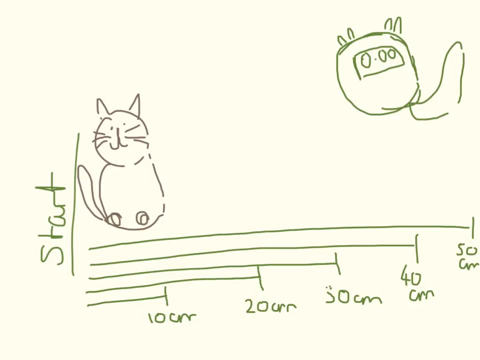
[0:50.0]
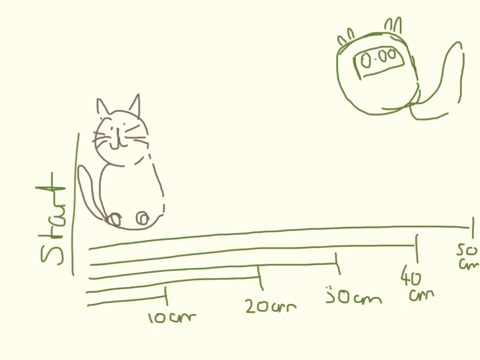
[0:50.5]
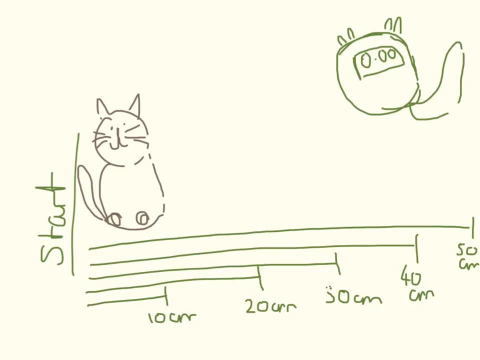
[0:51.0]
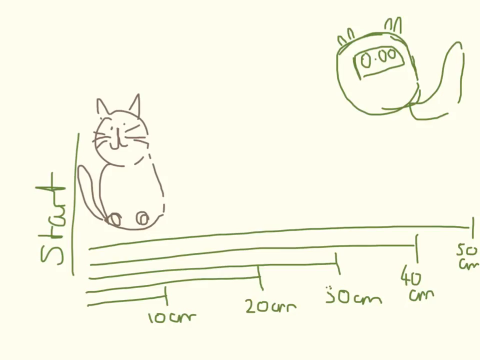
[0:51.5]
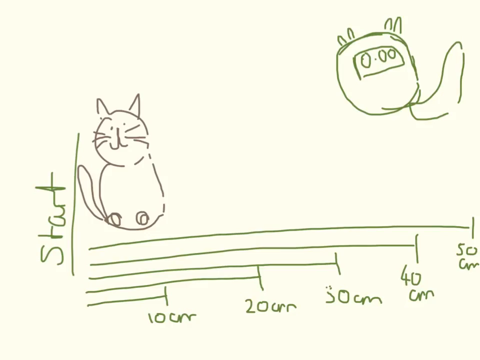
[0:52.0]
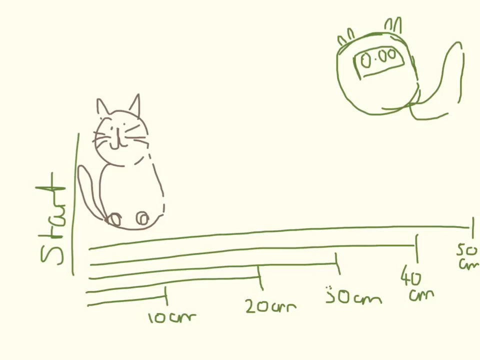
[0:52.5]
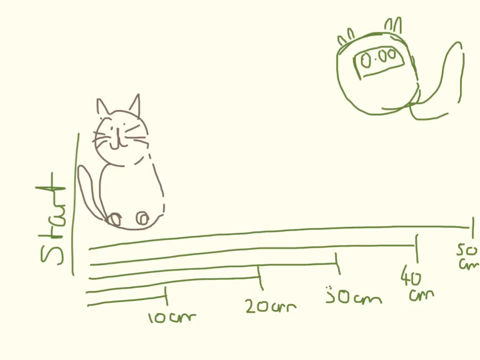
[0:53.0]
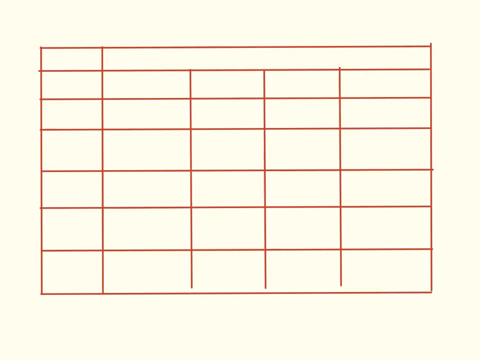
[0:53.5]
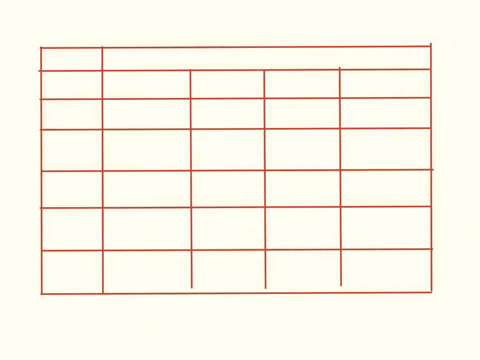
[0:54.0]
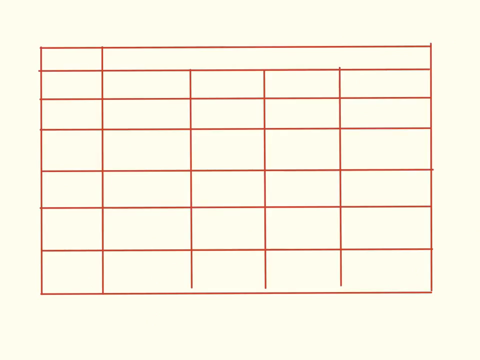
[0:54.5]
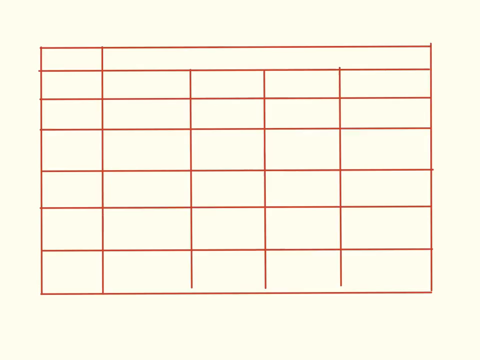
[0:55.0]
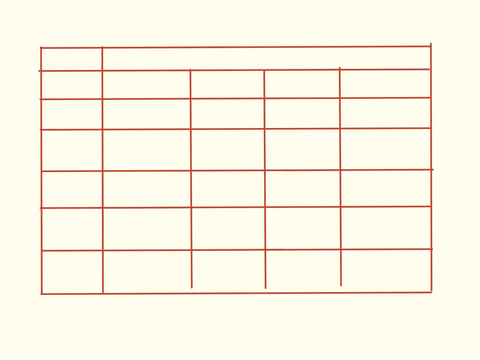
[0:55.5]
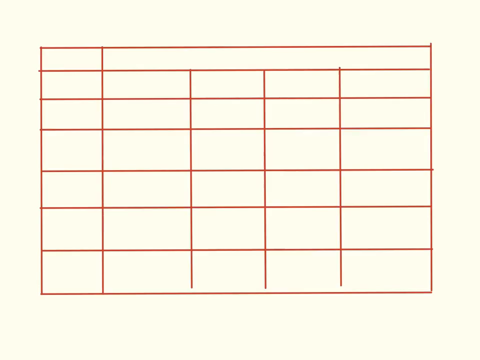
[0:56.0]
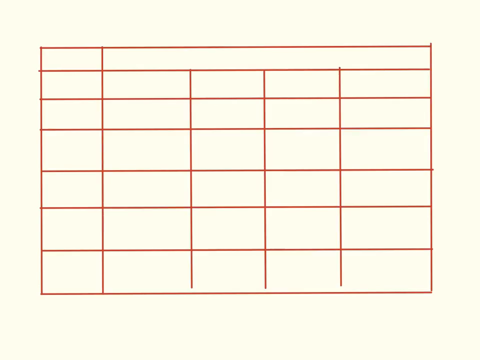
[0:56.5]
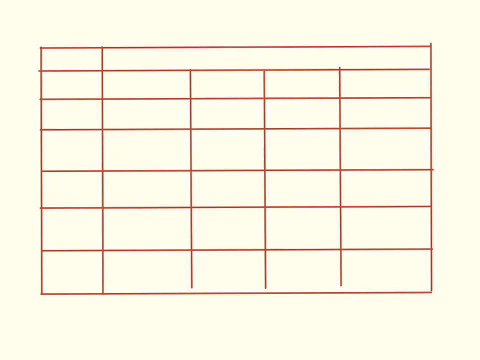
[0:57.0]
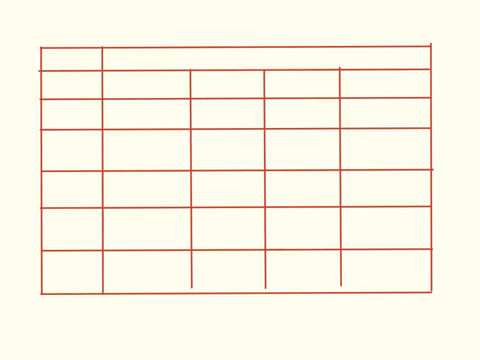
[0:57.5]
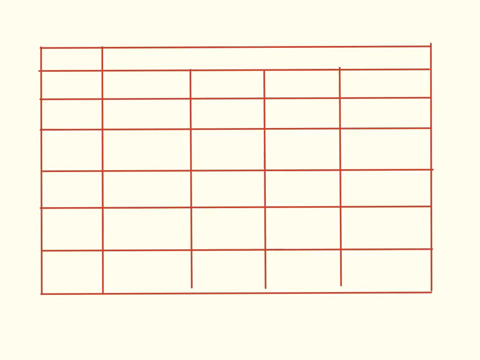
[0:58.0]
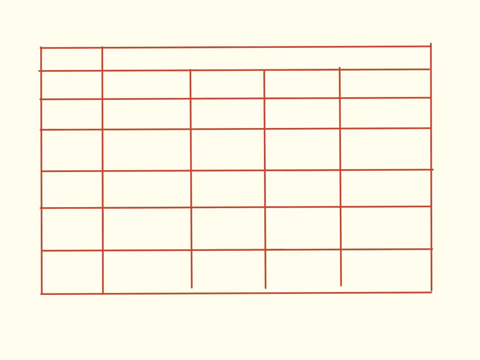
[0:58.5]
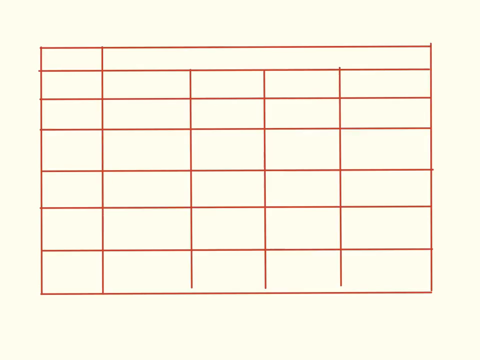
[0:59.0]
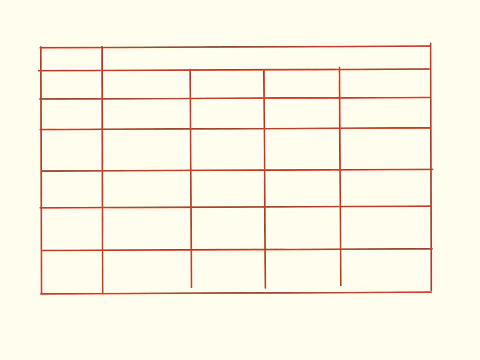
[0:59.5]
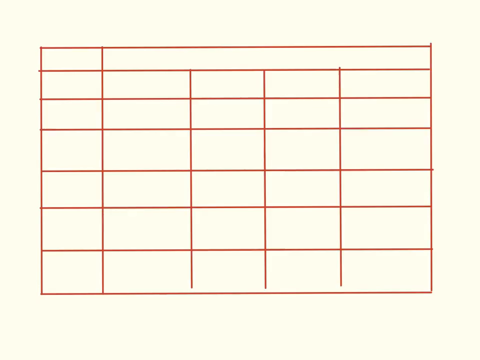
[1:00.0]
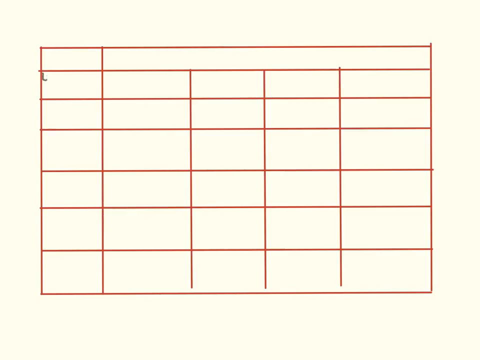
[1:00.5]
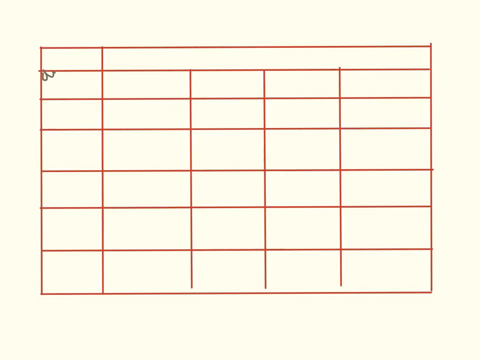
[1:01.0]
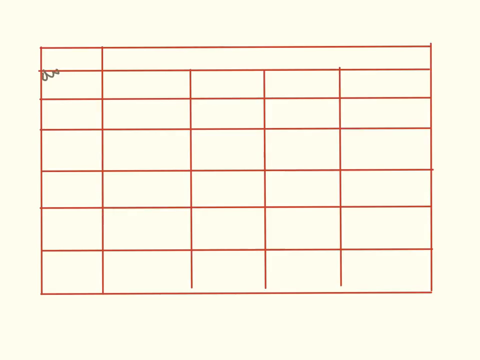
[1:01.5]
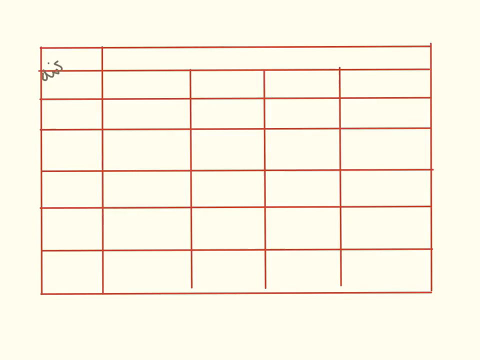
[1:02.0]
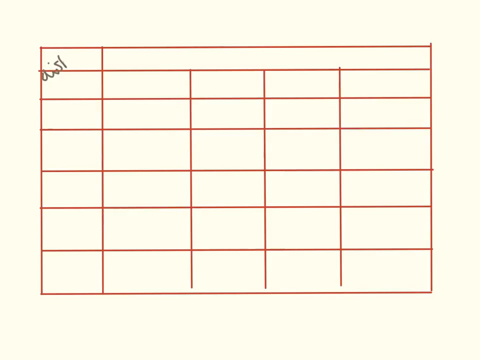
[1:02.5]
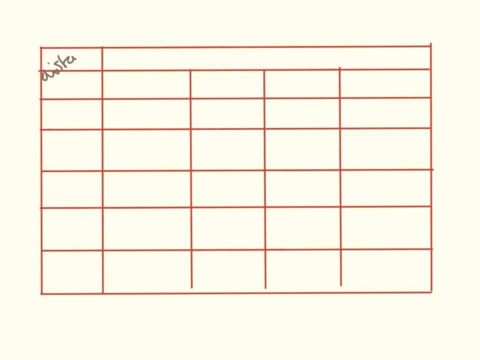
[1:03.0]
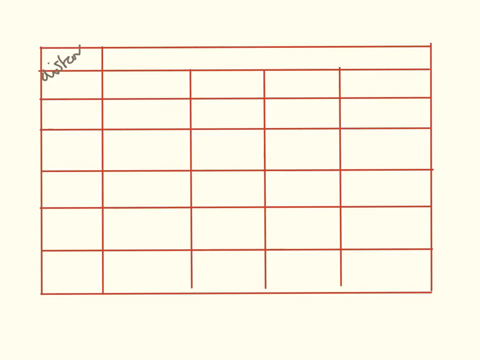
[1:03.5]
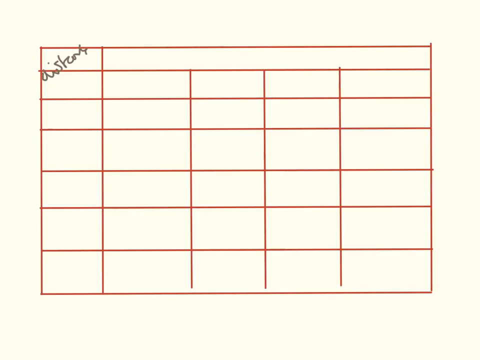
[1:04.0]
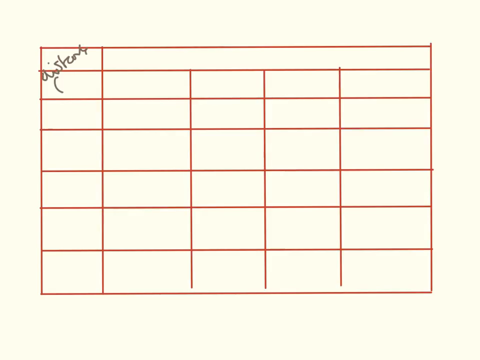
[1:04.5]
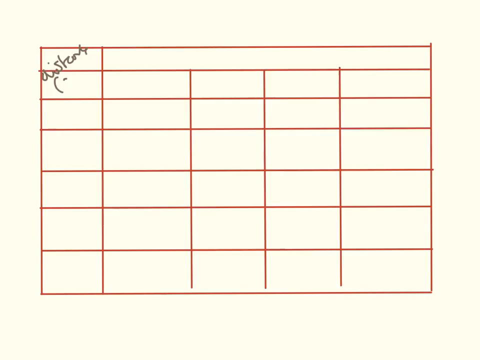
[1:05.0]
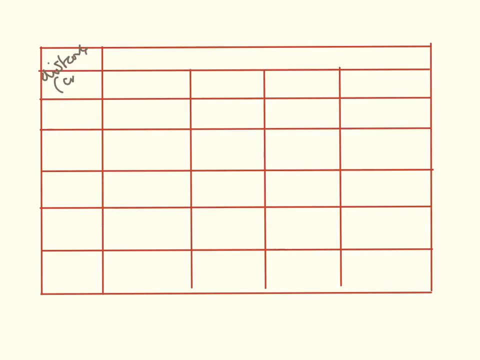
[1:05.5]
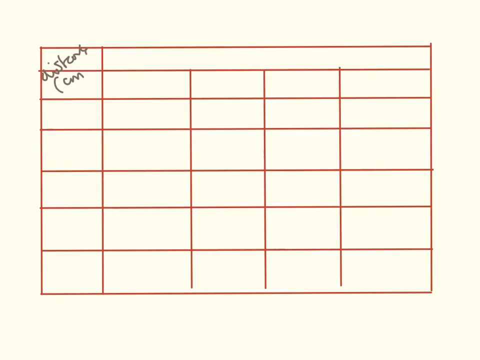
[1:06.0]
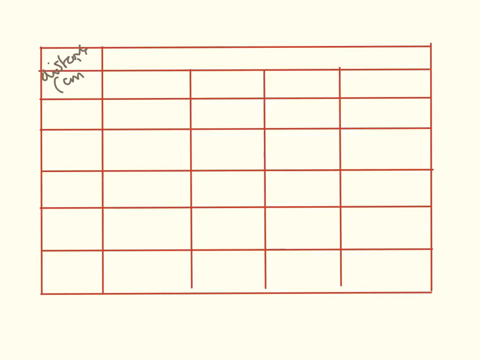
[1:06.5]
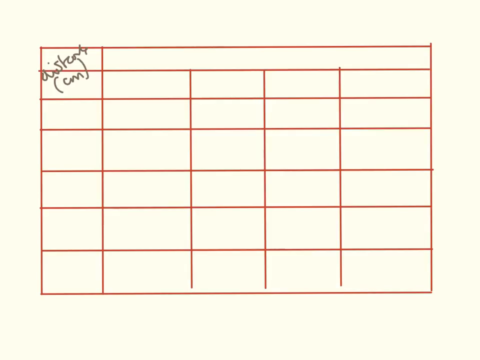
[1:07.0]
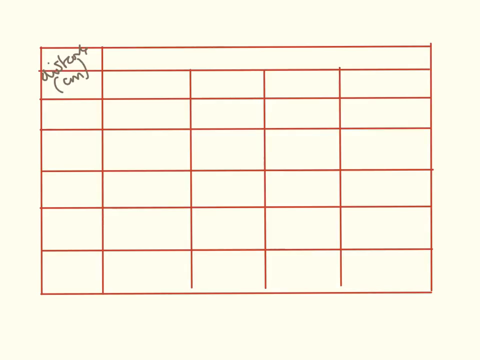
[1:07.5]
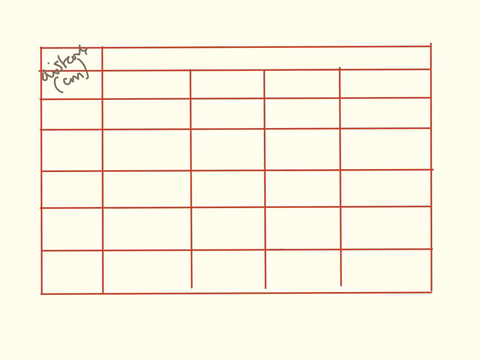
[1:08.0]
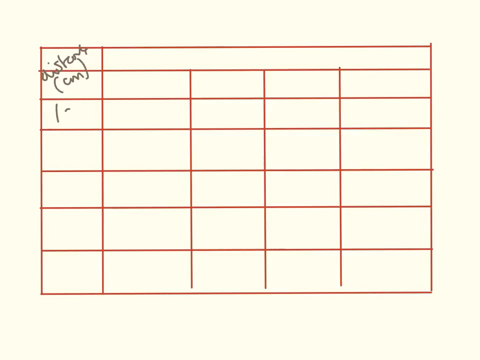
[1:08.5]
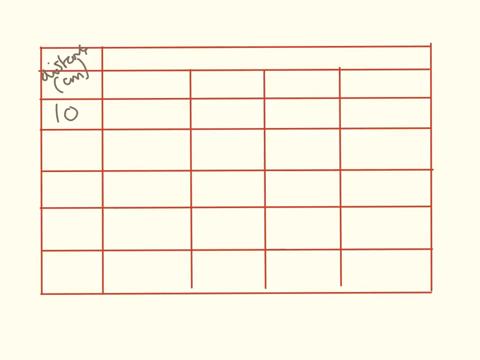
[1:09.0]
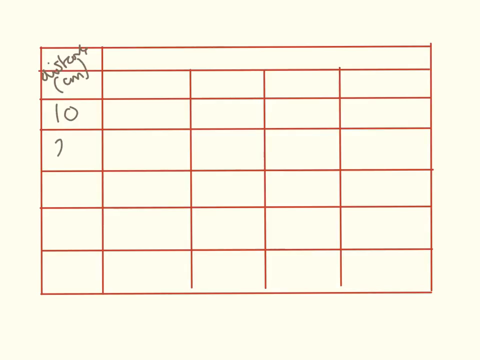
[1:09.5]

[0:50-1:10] A yellow background has gray and green drawings: a cat on the left side with some gaps where lines are supposed to be, and on the upper right side a drawing that looks like a green pod with wings and a tail. Green cursive text to the left of the cat reads "start" with a green line, and five green lines are labeled "10cm," "20cm," "30cm," "40cm" and "50cm." The video then moves to another screen with a yellow background and a red grid box made of many red lines. Something hard to make out is written in the top left corner, and the number 10 is visible. Some boxes of the grid are larger than others, very uneven.